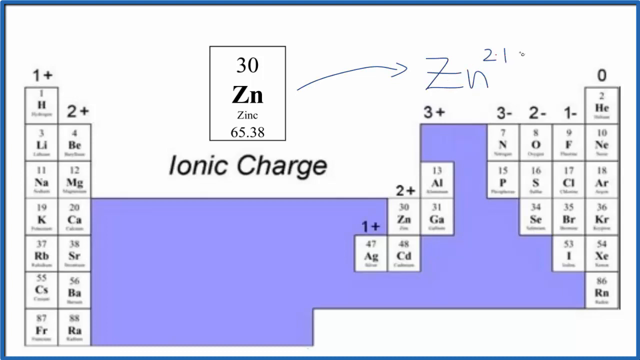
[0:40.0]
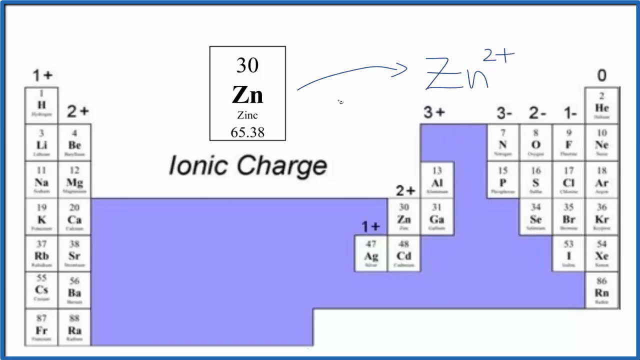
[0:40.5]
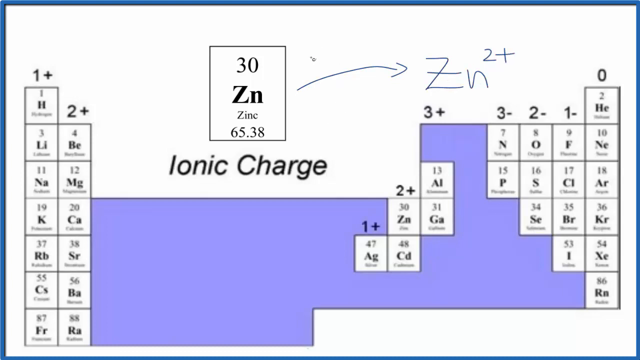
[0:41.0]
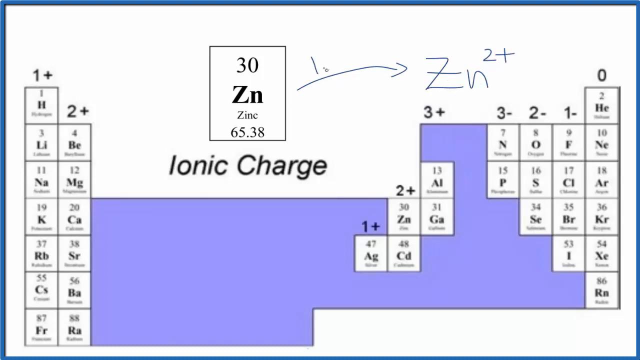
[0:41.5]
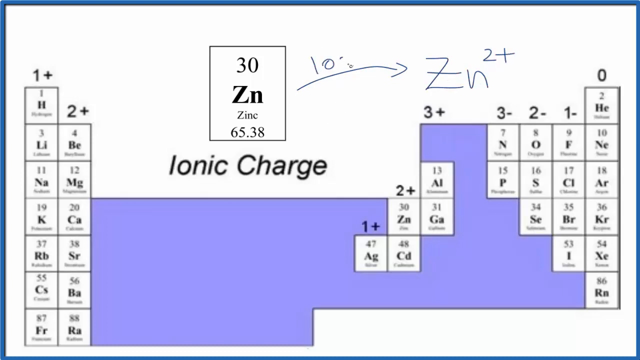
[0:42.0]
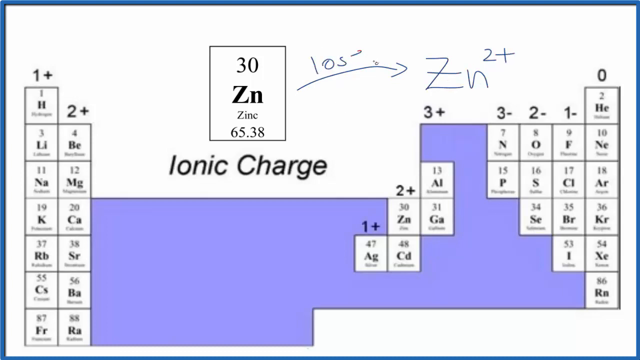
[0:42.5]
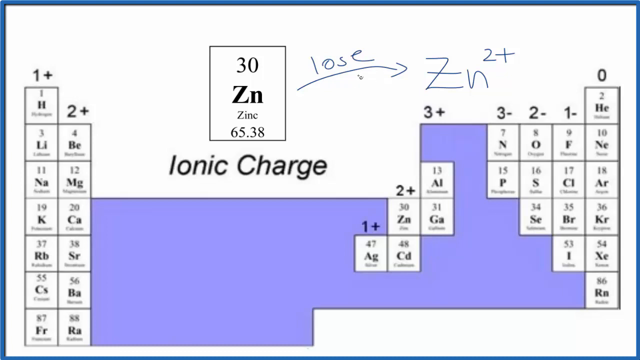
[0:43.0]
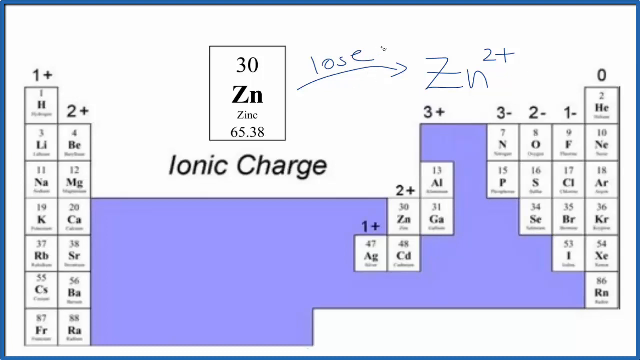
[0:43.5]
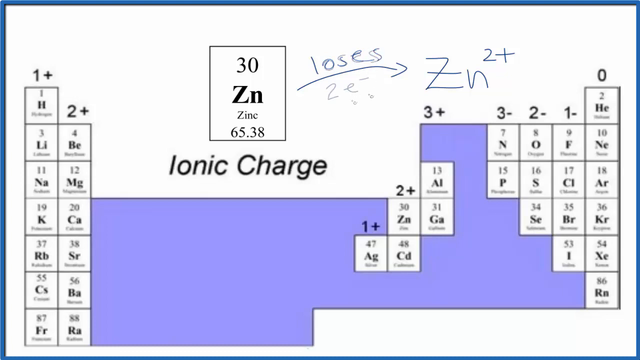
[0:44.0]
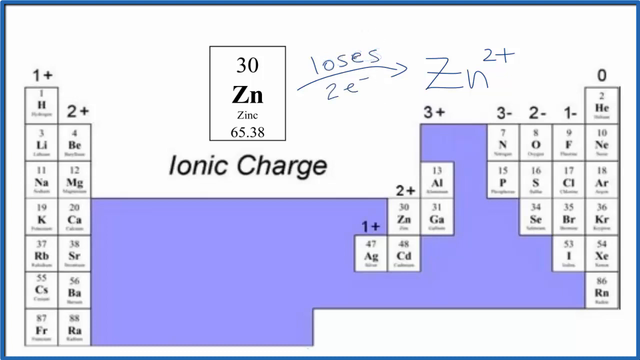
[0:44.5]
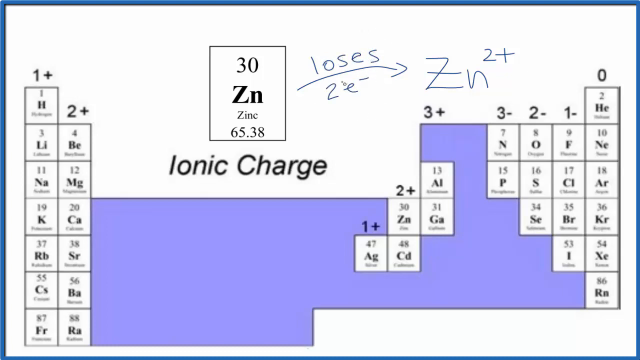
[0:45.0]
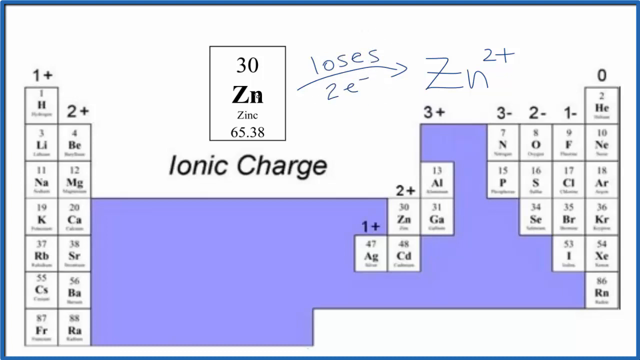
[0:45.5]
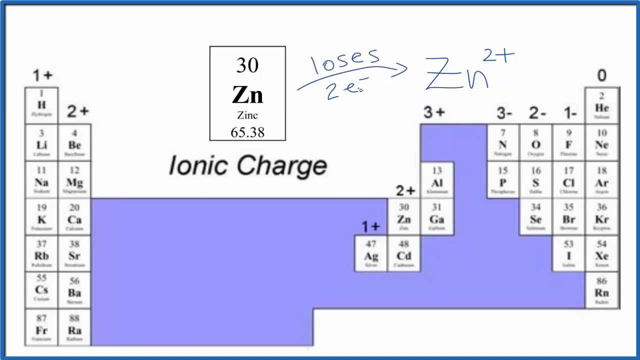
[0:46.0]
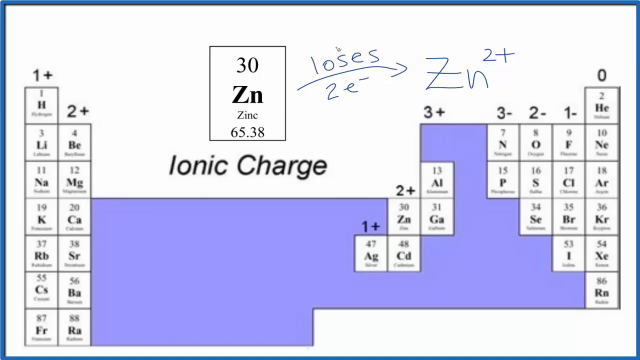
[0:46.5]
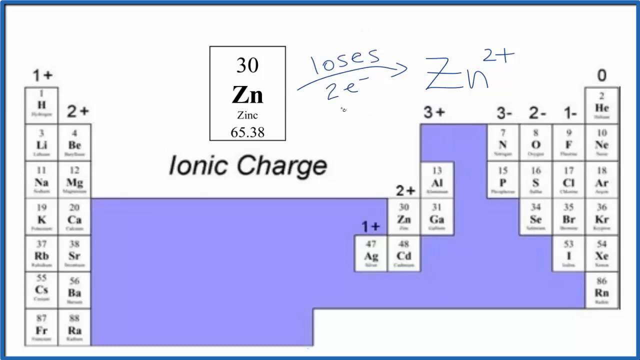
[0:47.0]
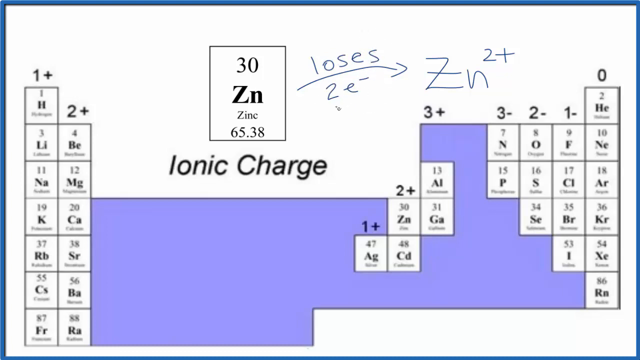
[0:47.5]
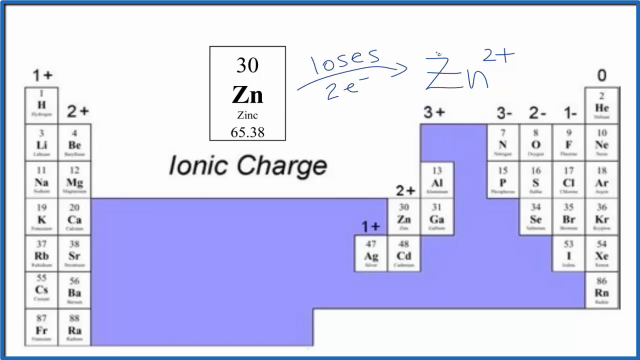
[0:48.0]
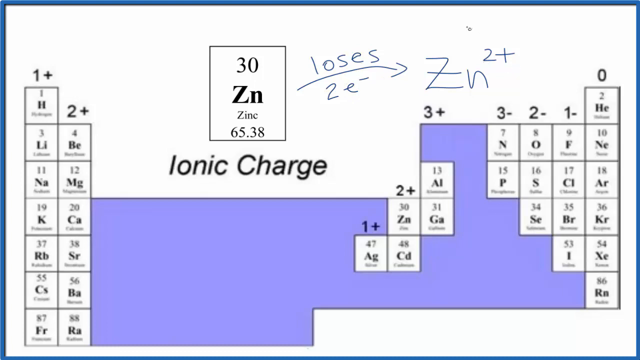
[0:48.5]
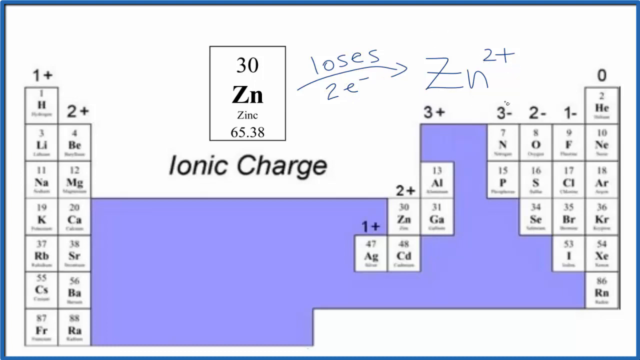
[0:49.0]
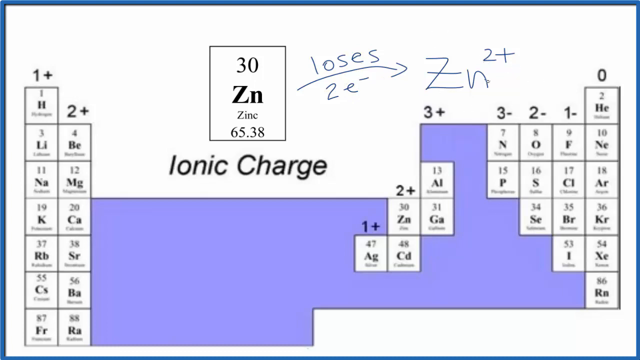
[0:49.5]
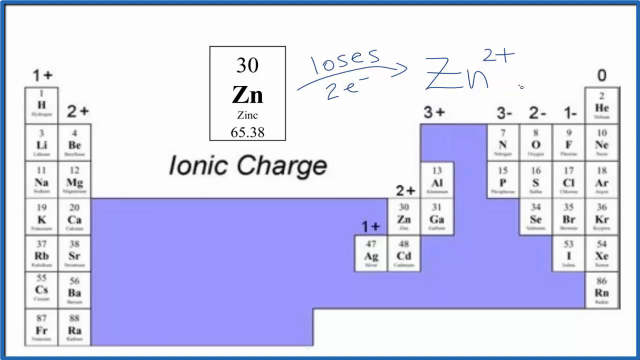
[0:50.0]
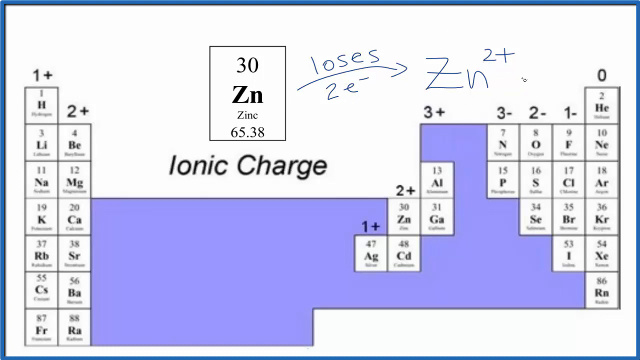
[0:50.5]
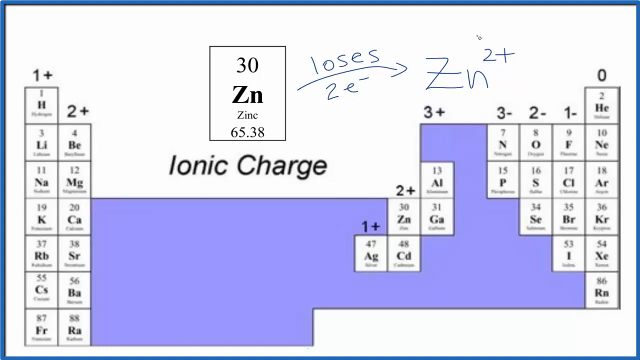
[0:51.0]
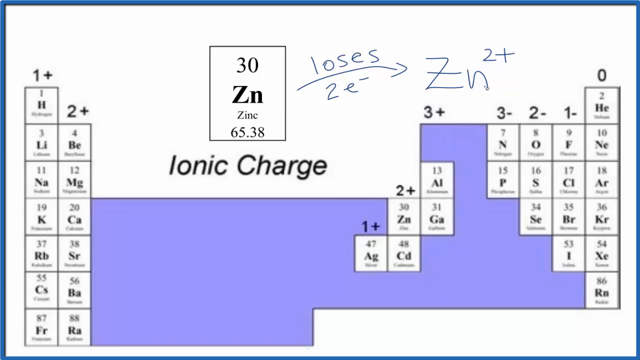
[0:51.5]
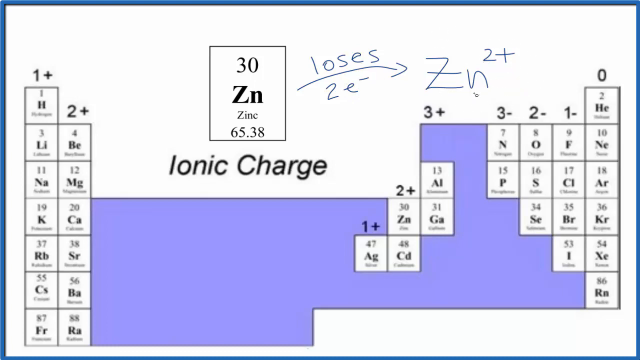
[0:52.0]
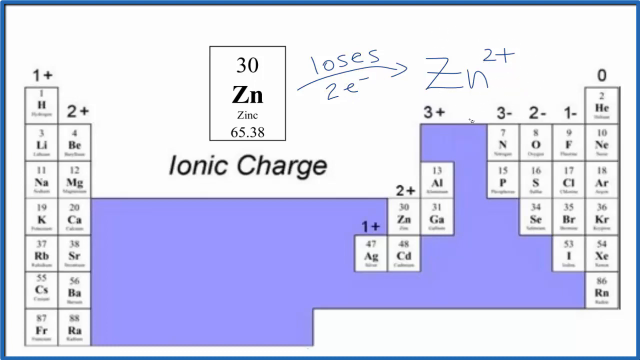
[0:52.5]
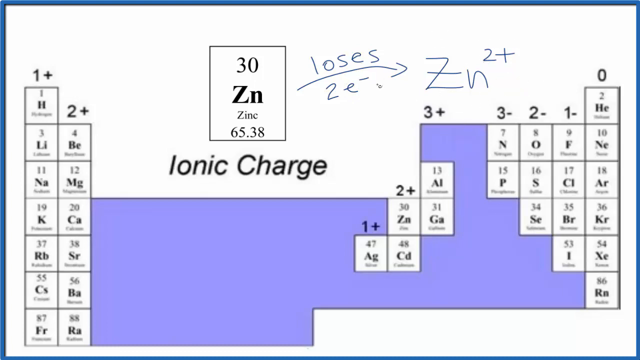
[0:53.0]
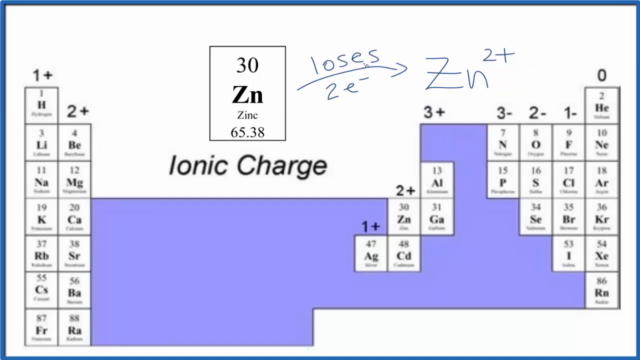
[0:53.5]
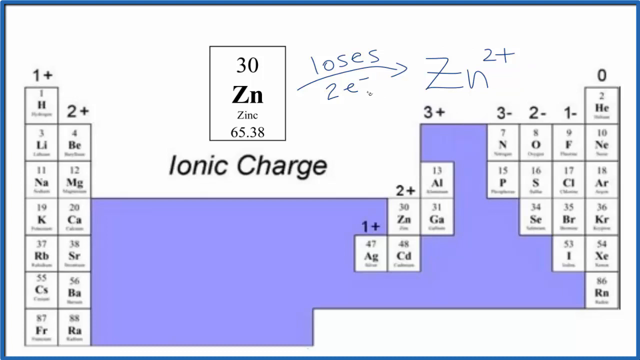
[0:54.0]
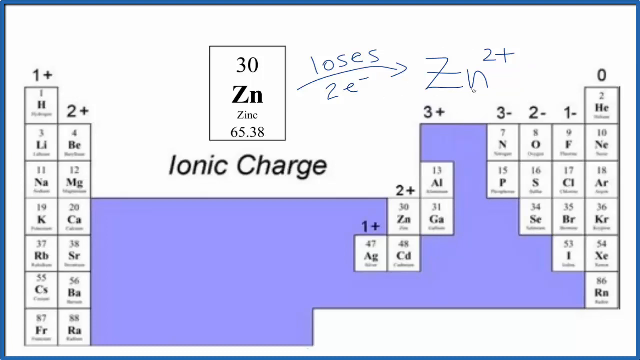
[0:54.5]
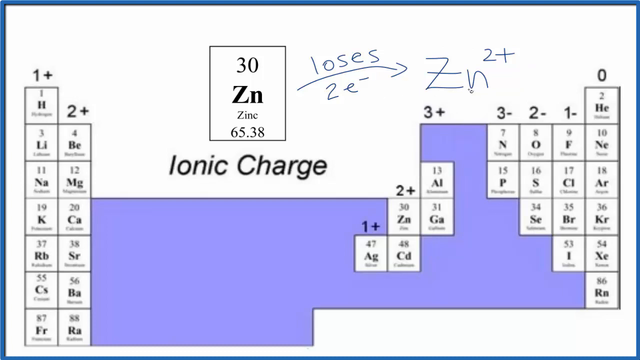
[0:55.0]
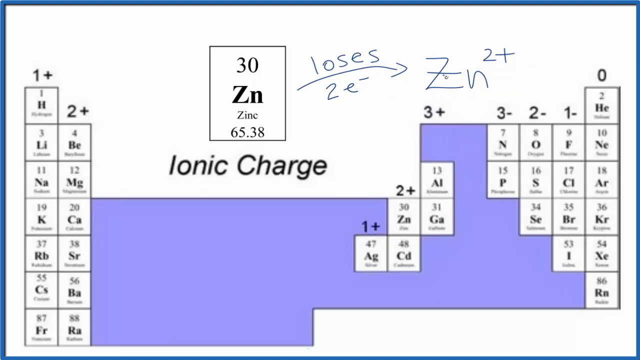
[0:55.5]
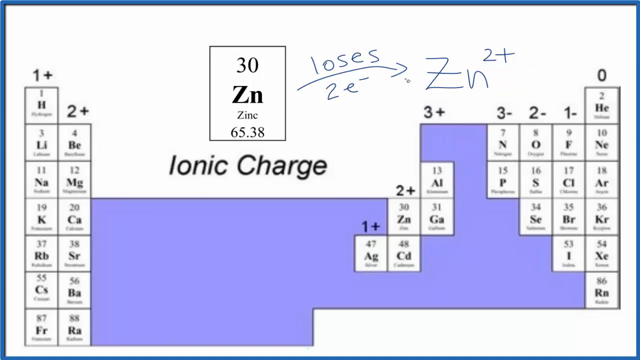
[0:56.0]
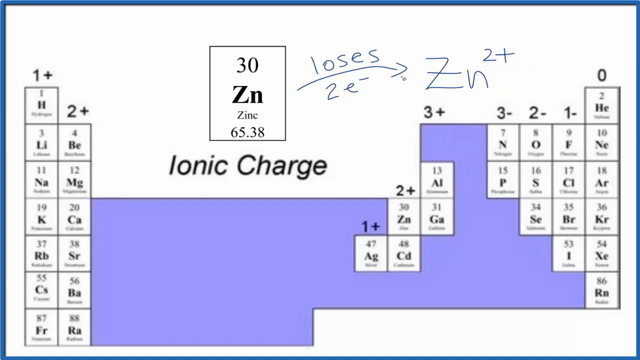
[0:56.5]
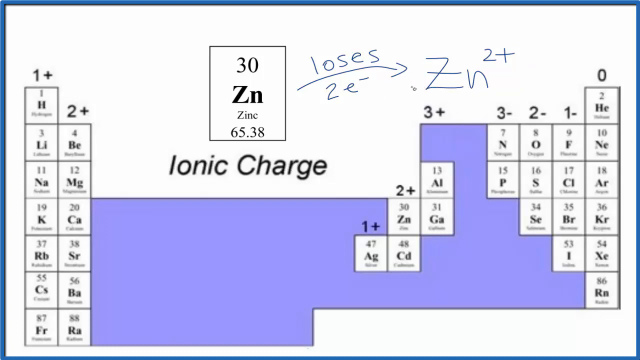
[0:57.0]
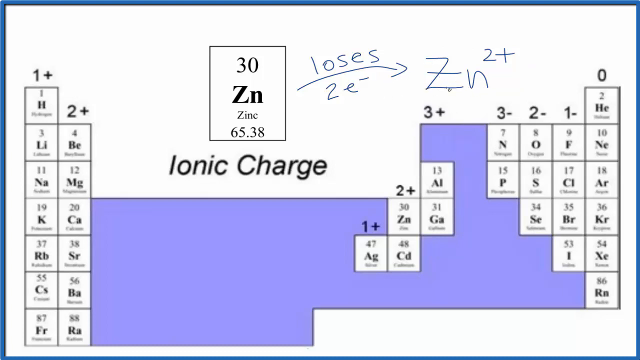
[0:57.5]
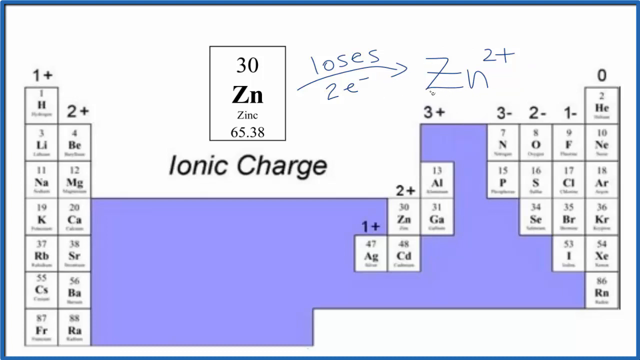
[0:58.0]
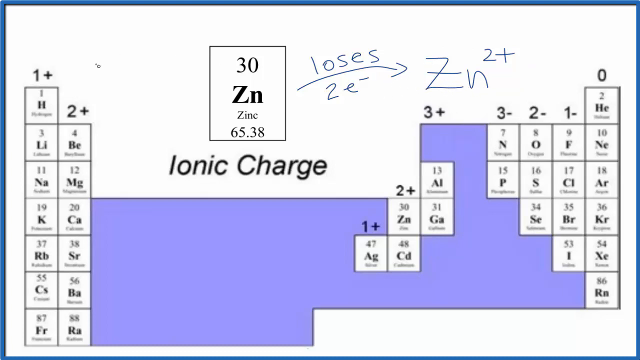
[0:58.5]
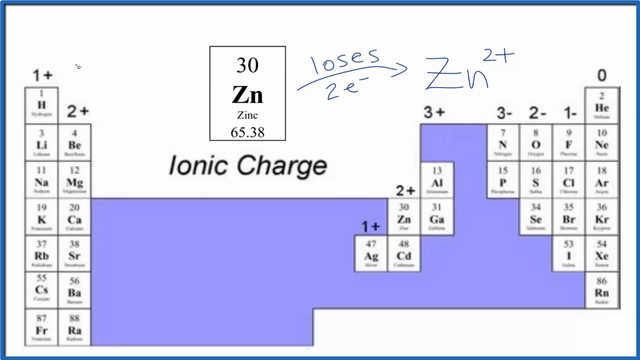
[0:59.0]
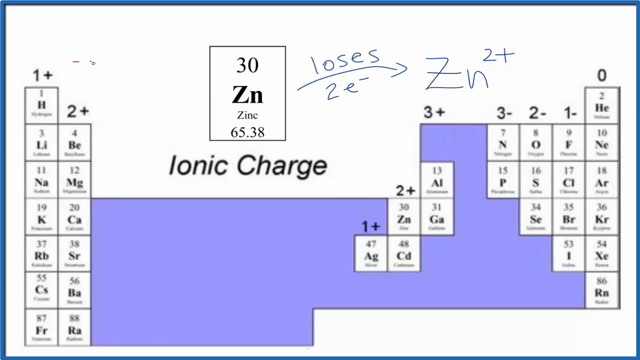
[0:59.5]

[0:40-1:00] The cursor moves around the area where "losses" is written with the arrow and "2E" underneath. It then circles around the handwritten "ZN", and moves back over to the small handwritten "2E" on the left-hand side of the screen. The cursor hovers over both sections several times without writing anything on the board. It keeps moving and hovering over this section, going from the left-hand side of the handwritten words back over to the right-hand side of the screen, then traces an invisible arrow along the blue ink arrow already drawn, mimicking its shape. The scene ends with the cursor hovering over the larger font that says "ZN".